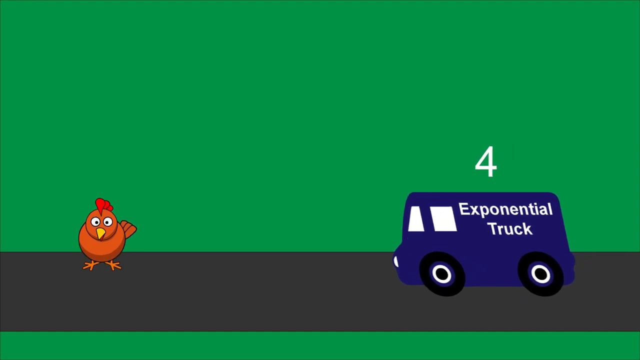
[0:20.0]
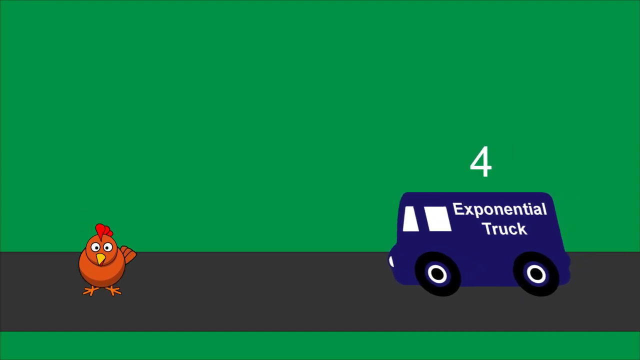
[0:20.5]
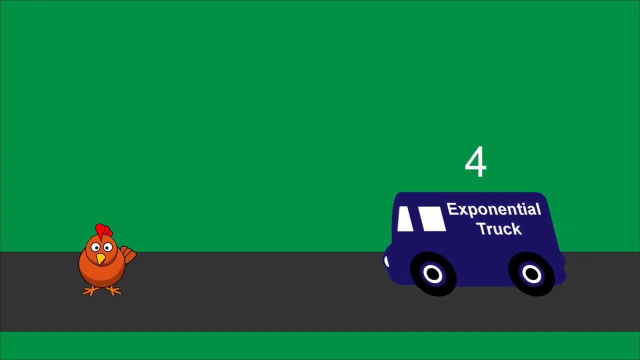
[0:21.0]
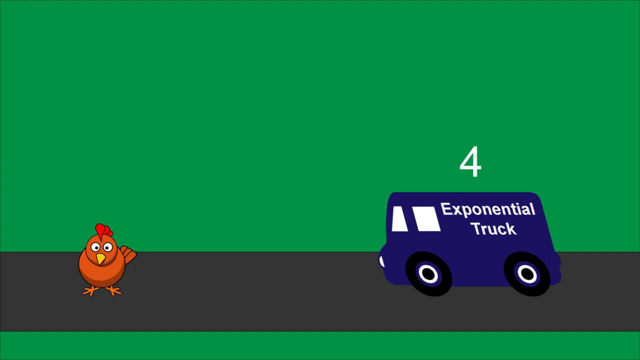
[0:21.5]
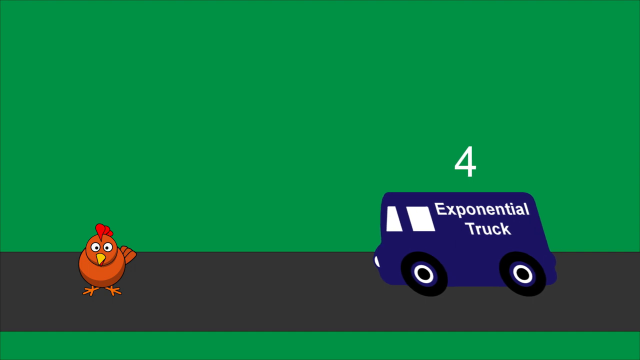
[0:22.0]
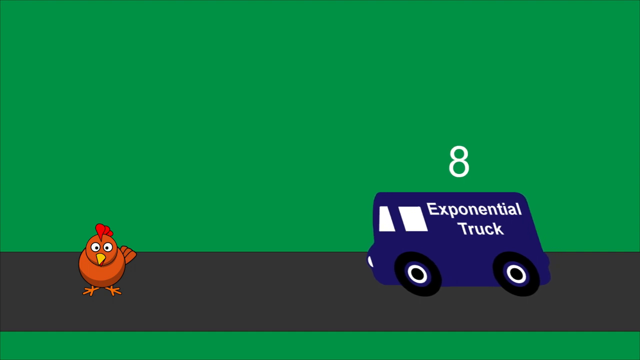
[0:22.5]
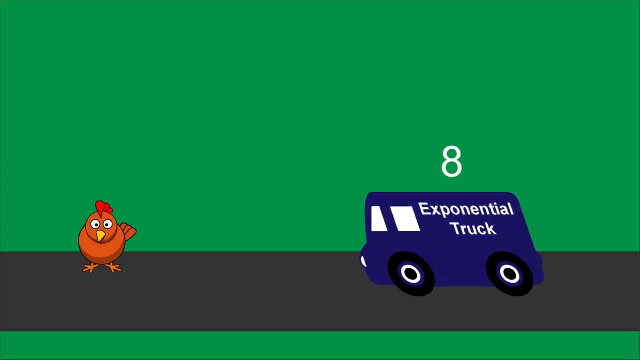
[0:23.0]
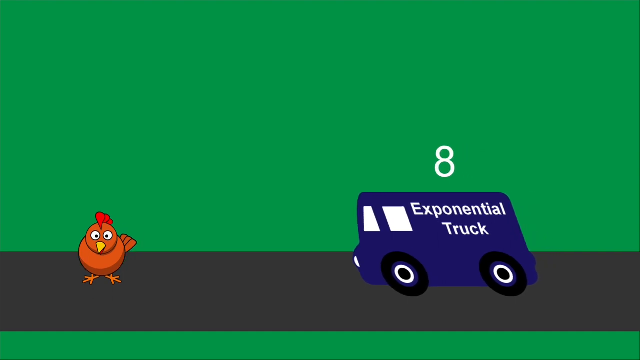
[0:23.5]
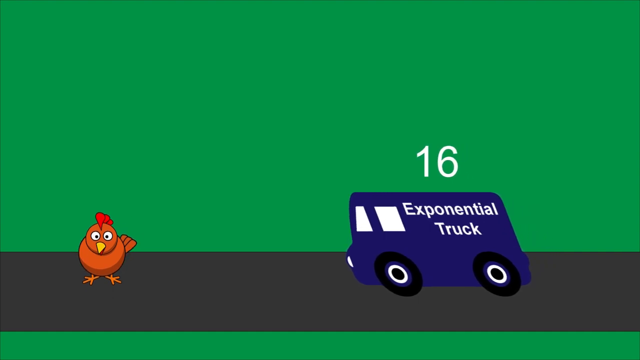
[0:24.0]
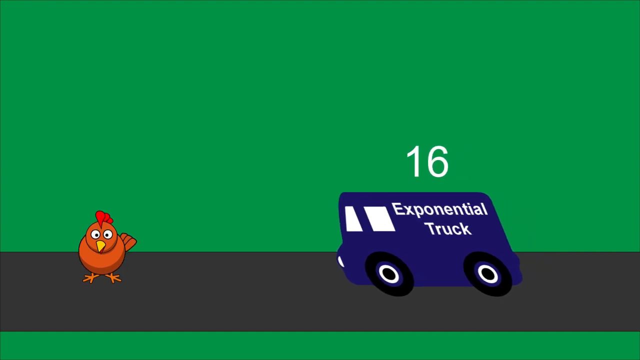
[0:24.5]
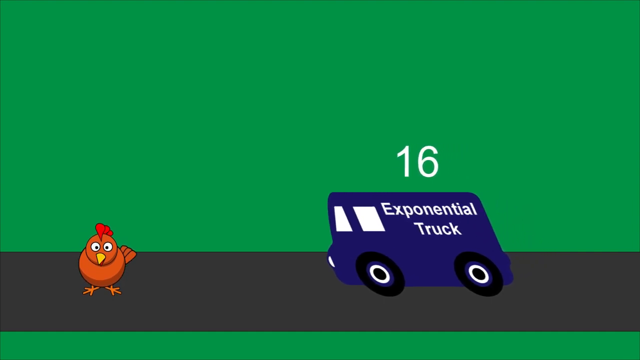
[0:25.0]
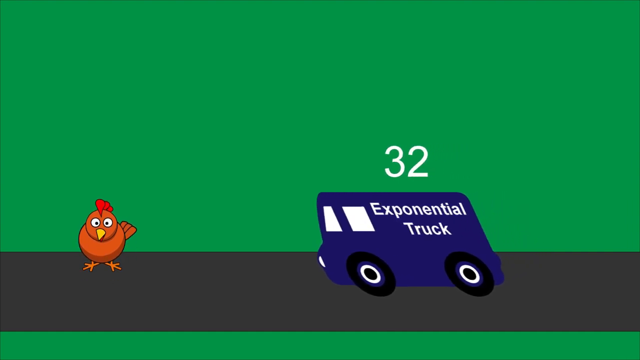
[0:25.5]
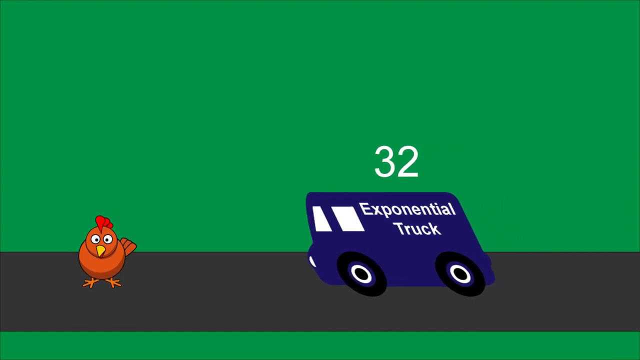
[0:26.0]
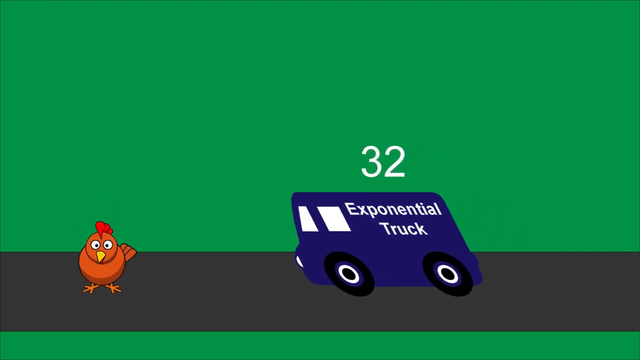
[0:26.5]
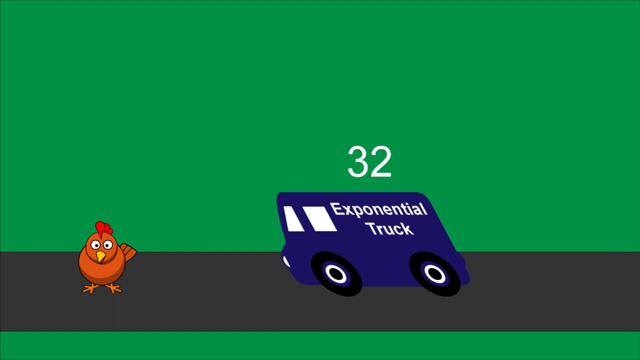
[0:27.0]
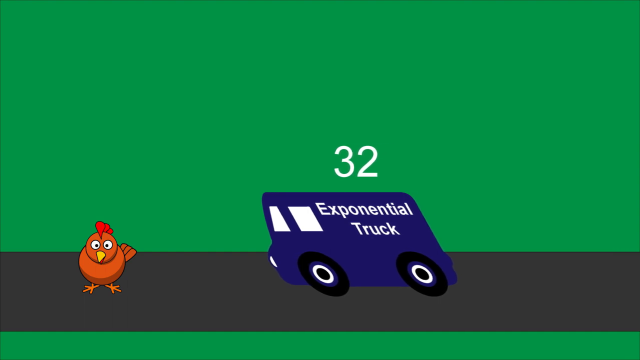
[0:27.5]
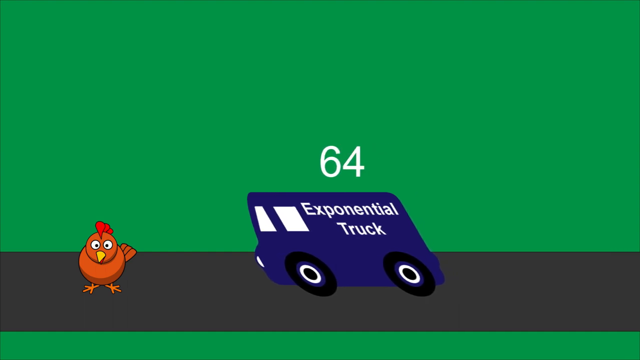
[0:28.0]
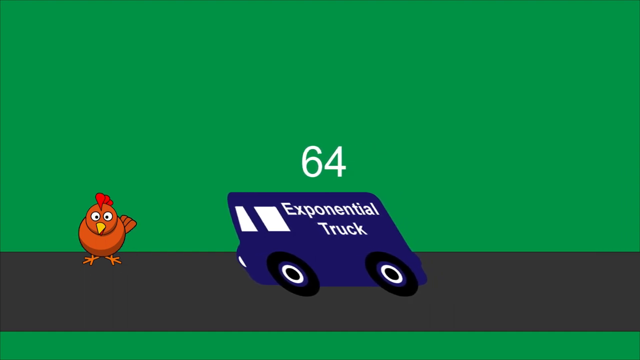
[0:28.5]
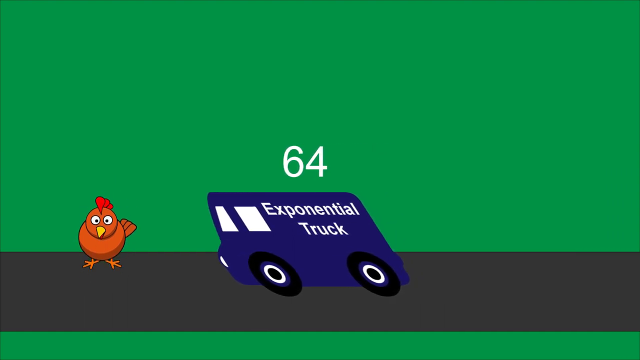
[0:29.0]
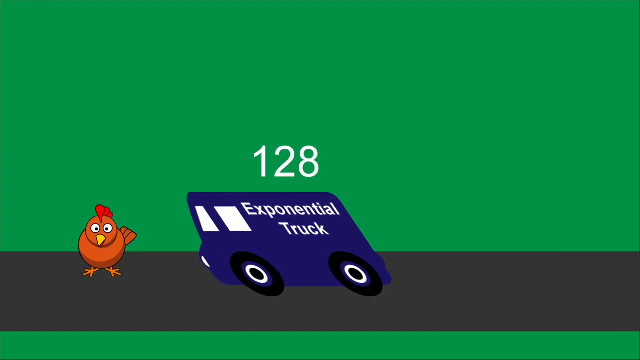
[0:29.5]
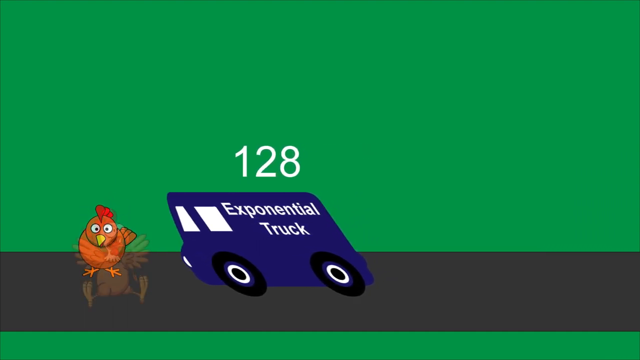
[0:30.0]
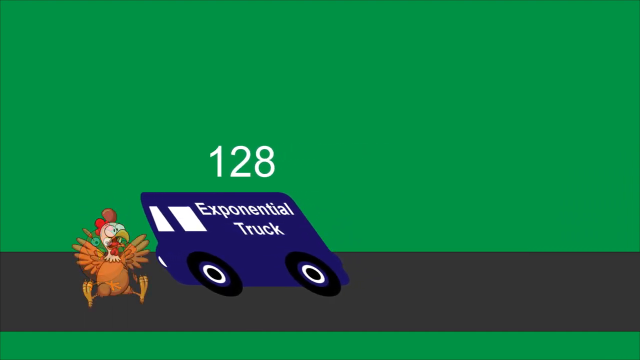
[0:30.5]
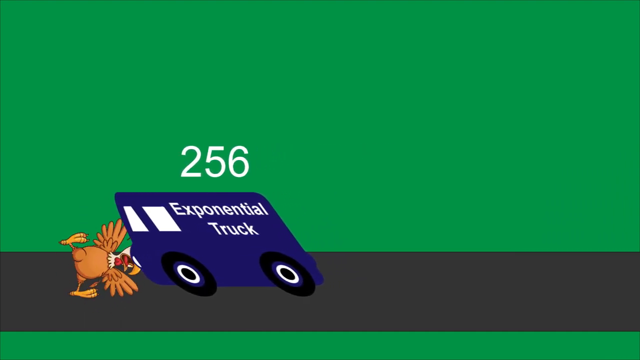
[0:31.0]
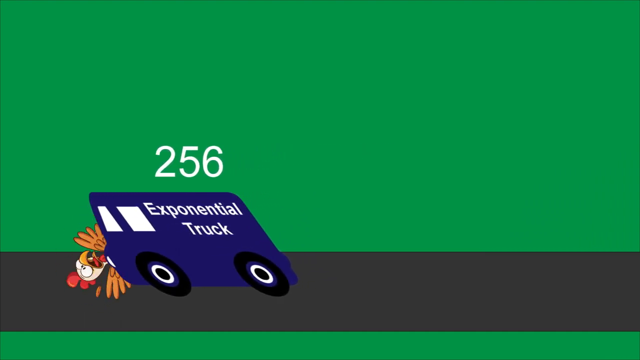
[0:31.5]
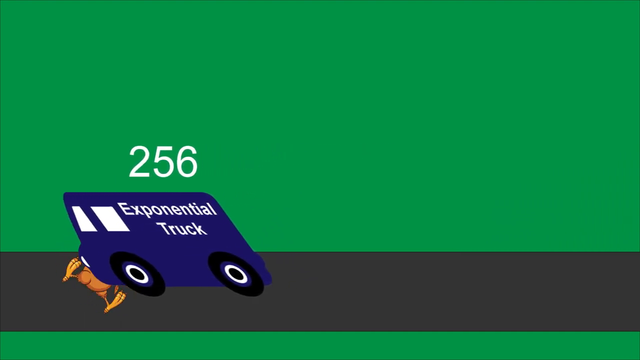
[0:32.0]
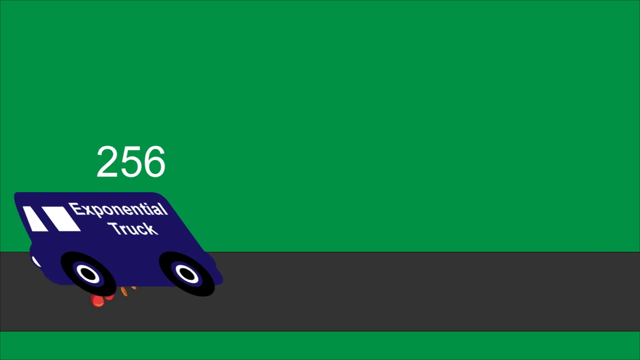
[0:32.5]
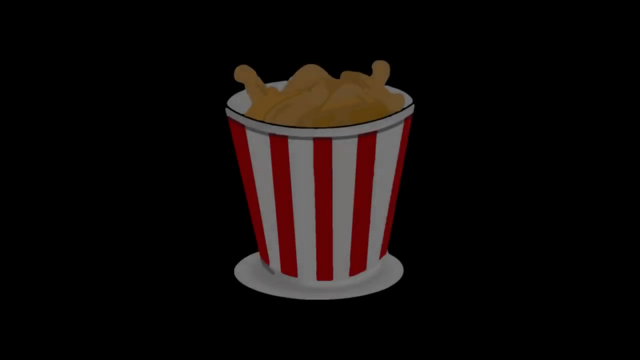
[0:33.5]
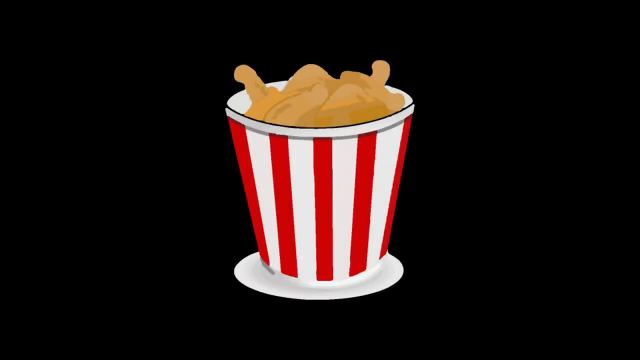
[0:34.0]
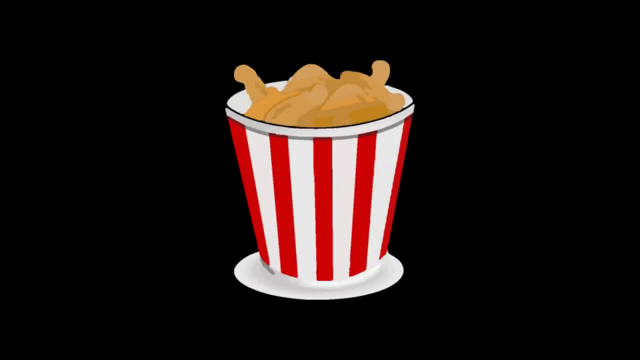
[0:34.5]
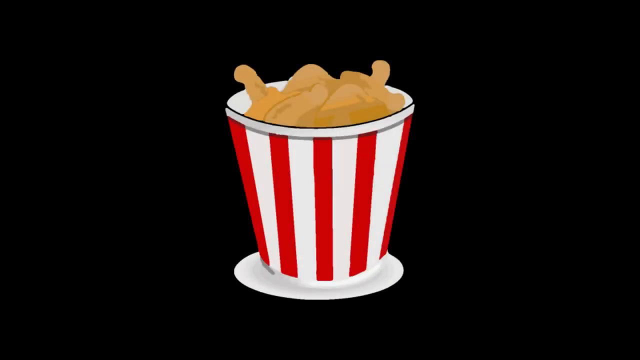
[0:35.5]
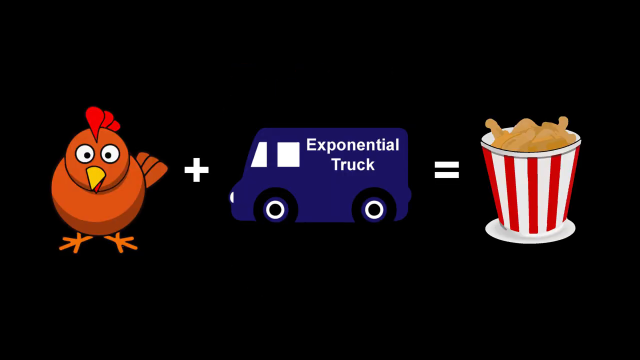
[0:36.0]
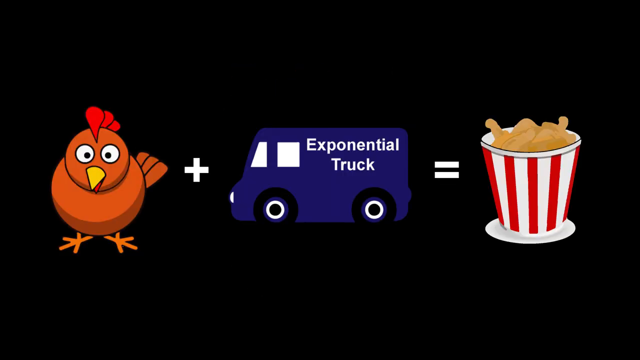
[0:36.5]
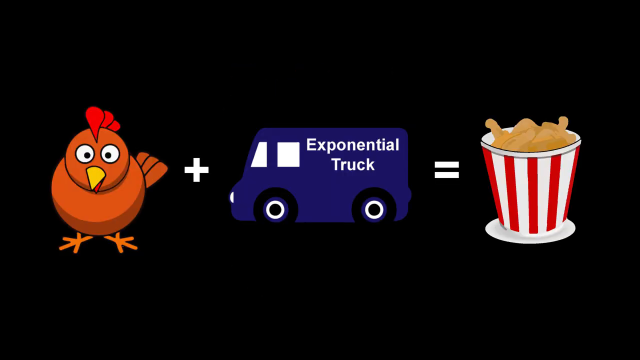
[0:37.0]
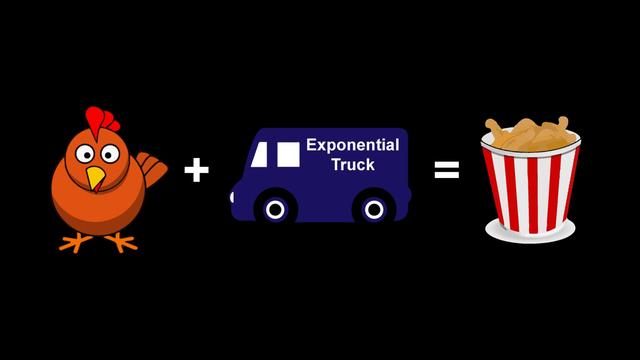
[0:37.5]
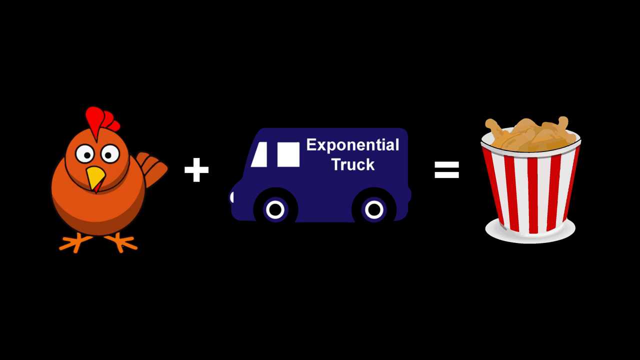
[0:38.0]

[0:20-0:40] The background is green with black at the bottom. On the right is a blue truck with the number "8" written on top of it, and on the left is the chicken. The truck moves towards the chicken while the numbers on top increase, multiplying by eight. When it reaches the chicken, the truck hits it, and the chicken changes into a smaller chicken with a much longer nose. The scene then changes to a black background with a red and white bucket at the center holding roasted chicken. The next page shows the chicken plus the truck equals chicken in a bucket. The bucket of chicken looks like the chicken sold at KFC.